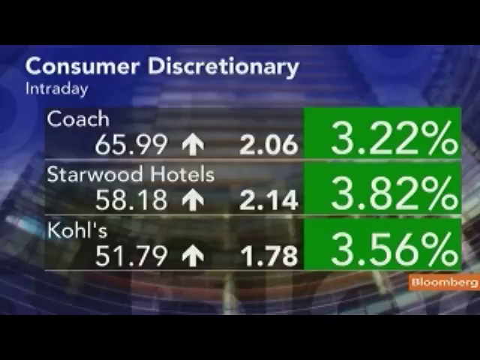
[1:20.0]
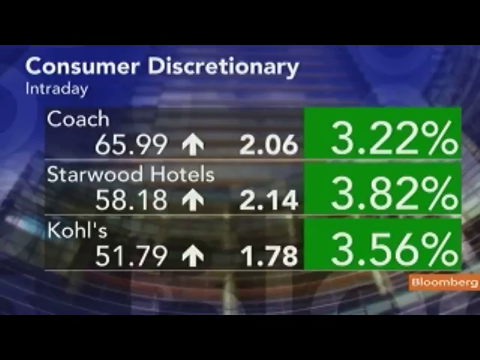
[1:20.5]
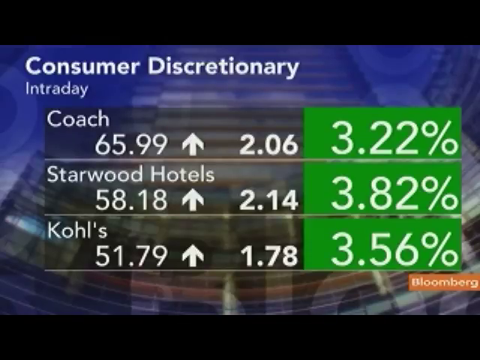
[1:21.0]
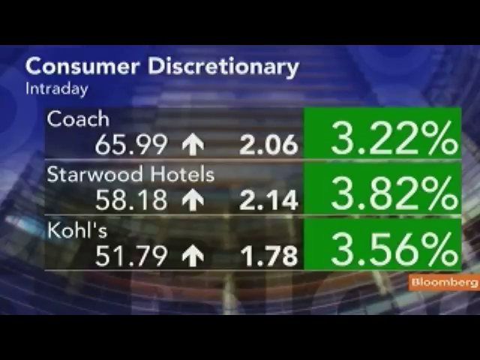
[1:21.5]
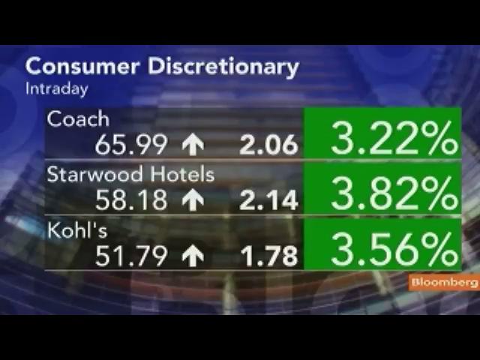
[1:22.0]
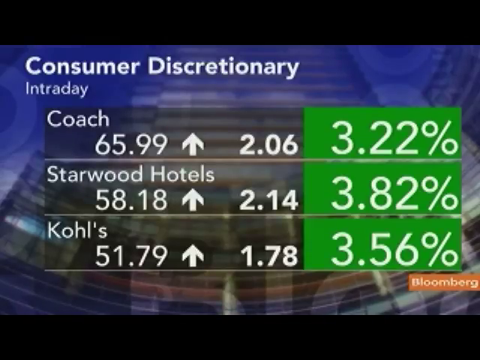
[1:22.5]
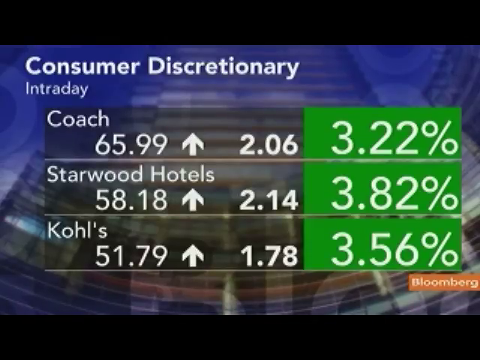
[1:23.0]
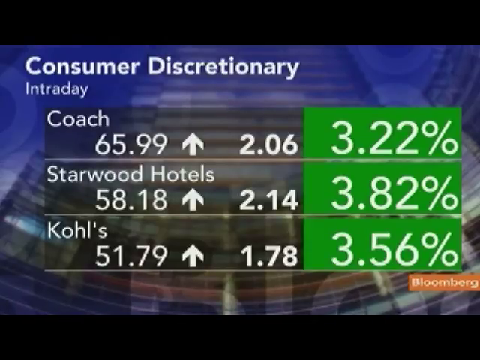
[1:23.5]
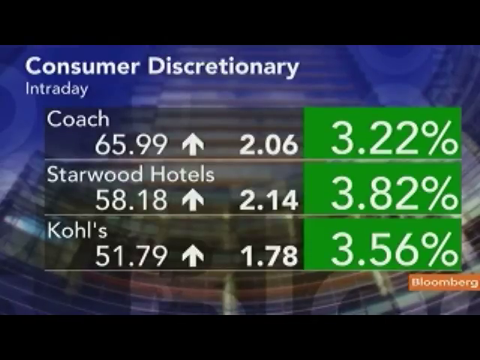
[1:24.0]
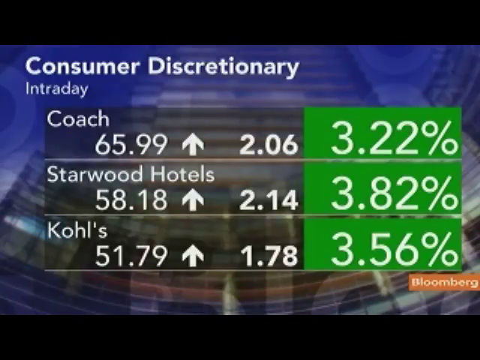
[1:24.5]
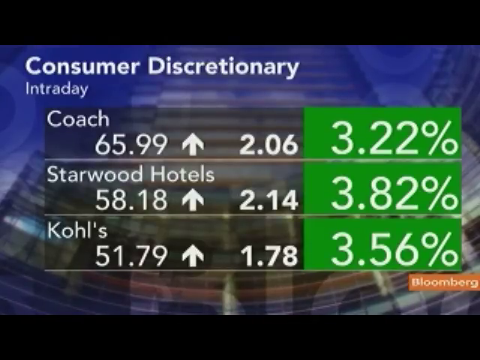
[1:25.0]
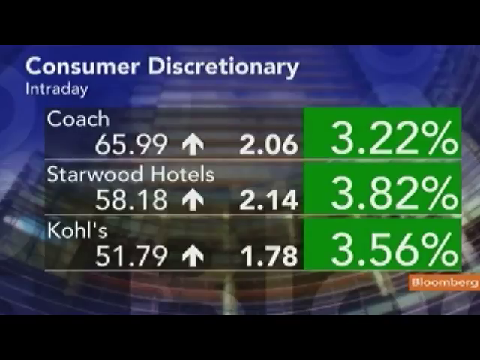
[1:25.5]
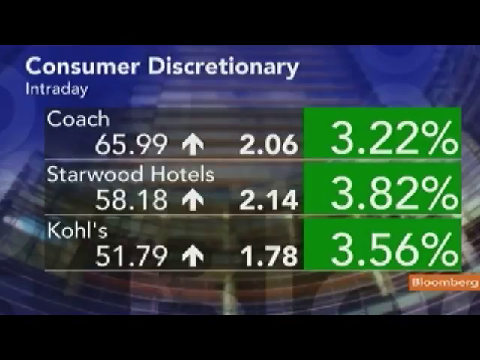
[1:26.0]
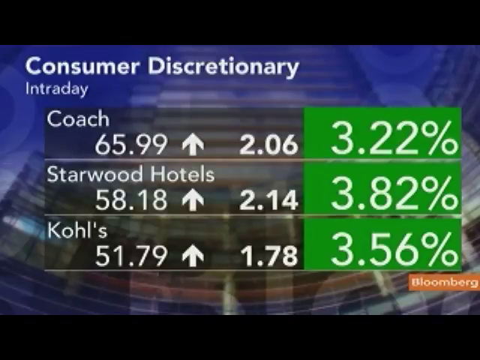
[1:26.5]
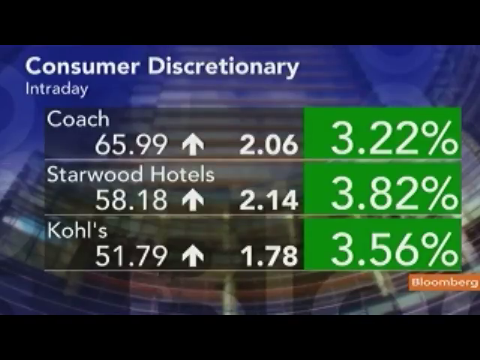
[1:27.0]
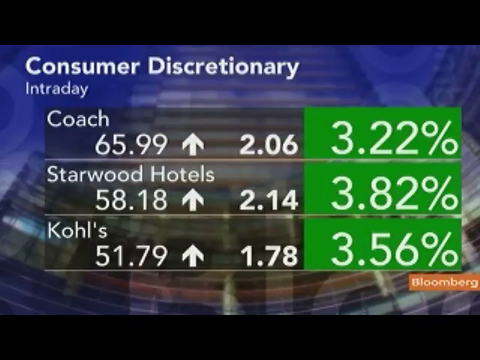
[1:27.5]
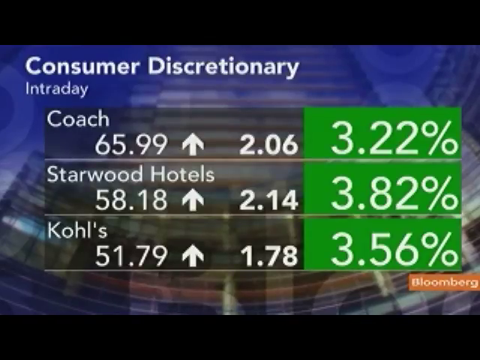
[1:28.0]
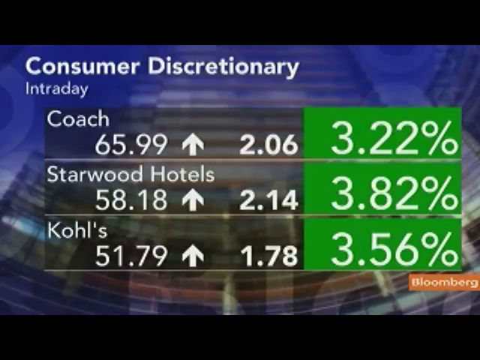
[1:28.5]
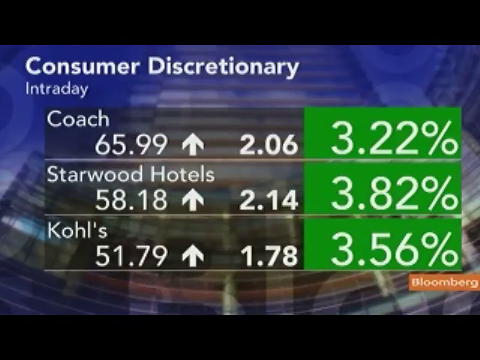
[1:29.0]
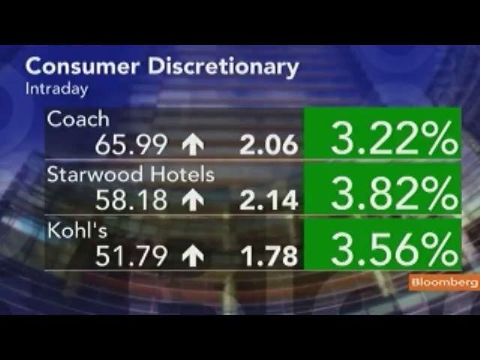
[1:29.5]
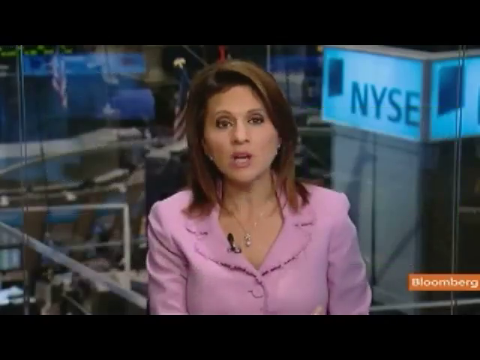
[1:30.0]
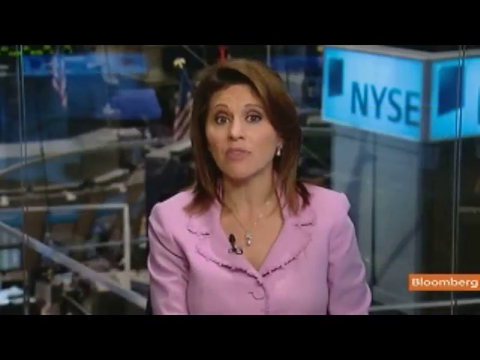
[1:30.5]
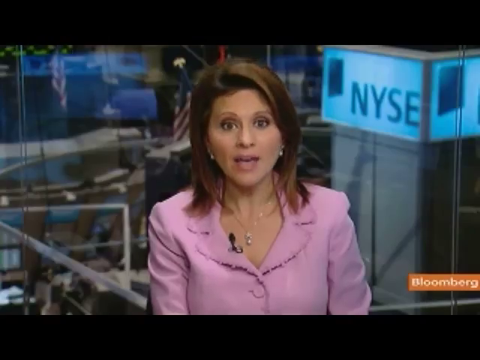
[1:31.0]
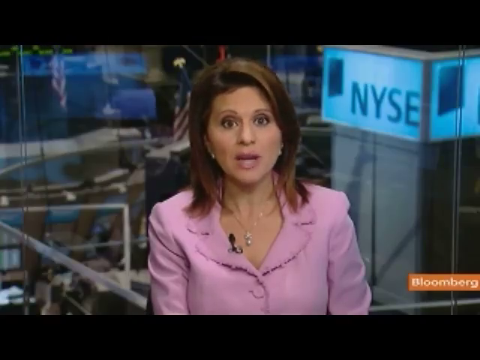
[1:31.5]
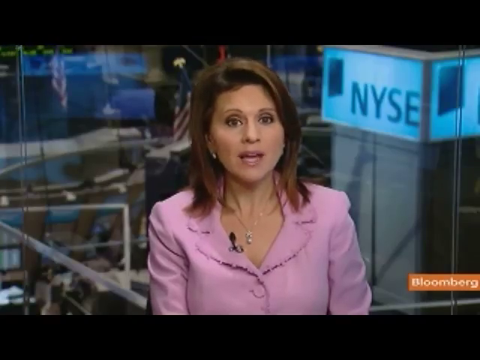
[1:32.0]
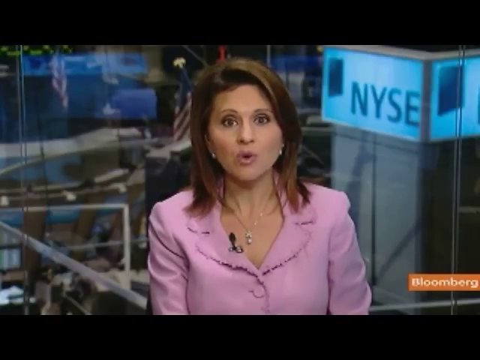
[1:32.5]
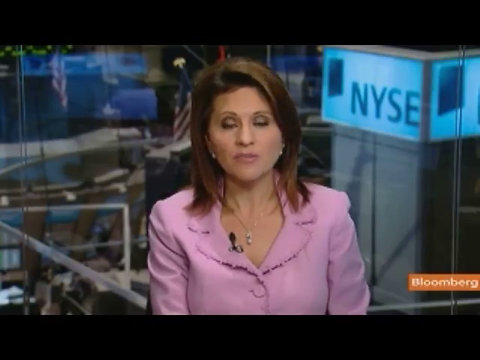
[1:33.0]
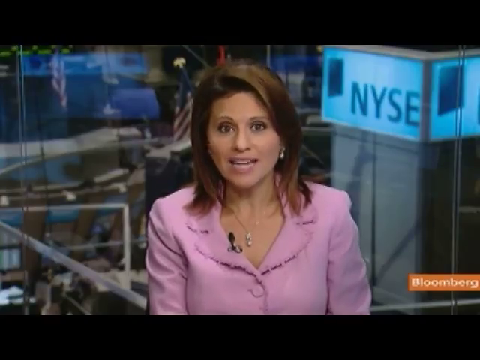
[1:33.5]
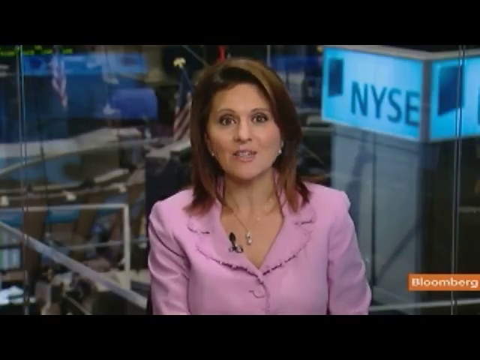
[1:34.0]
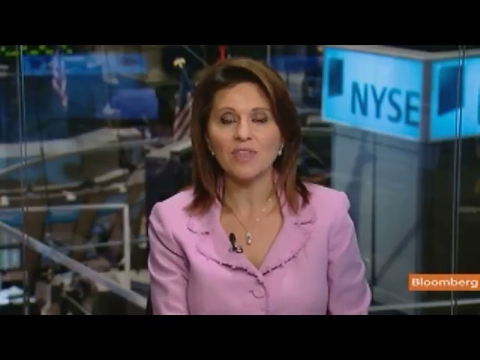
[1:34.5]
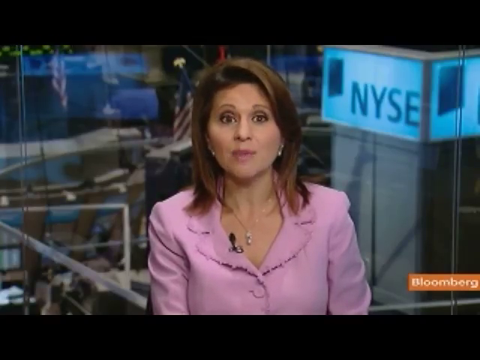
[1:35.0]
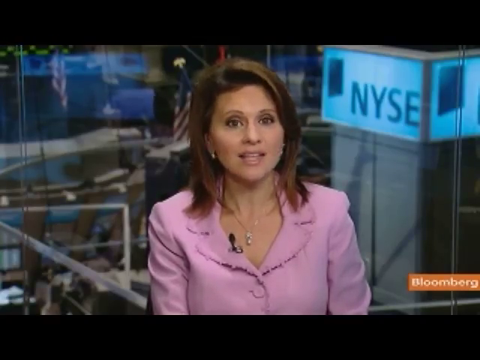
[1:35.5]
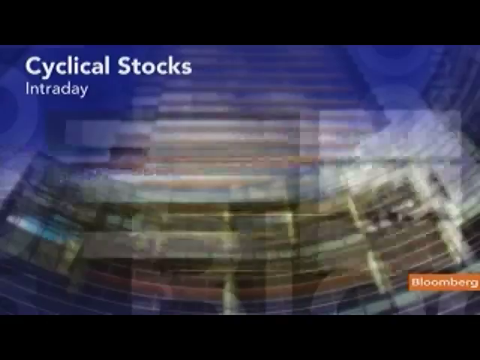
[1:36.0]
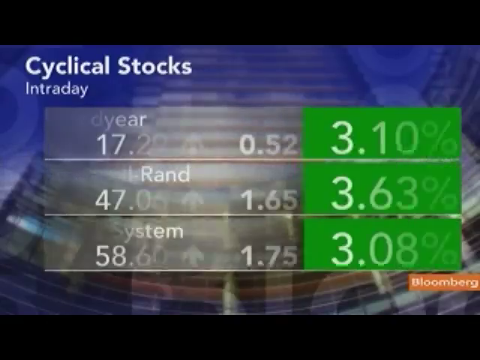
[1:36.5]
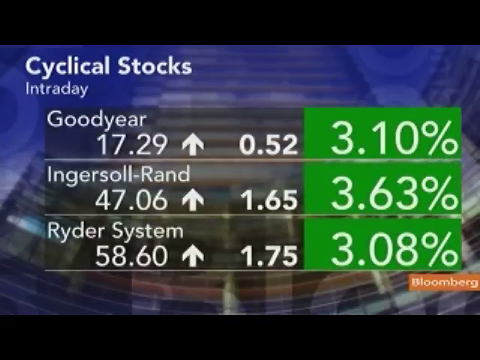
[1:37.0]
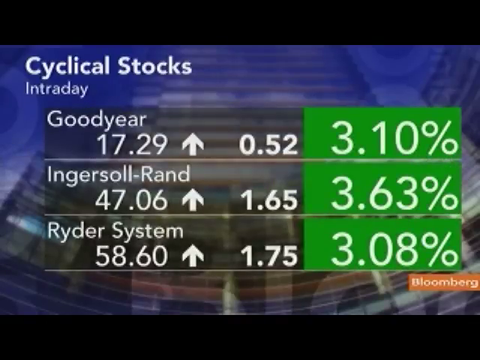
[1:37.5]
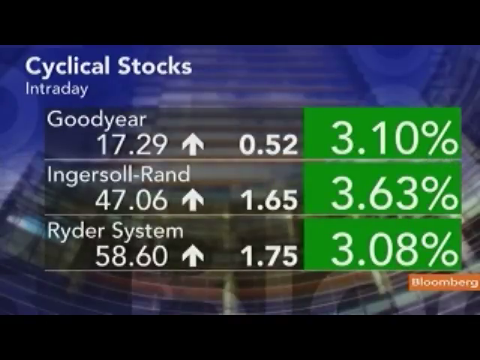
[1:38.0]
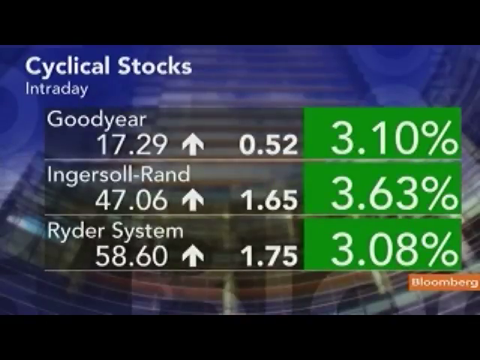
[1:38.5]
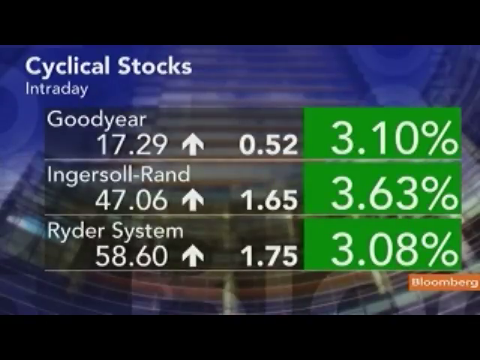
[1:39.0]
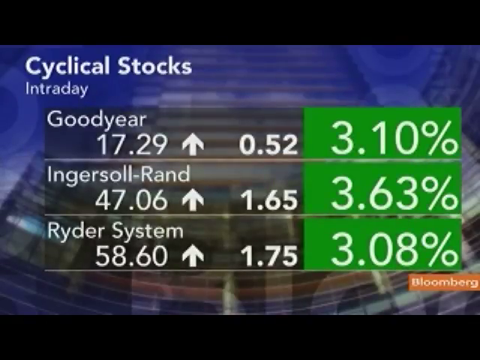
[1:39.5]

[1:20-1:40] The Bloomberg newscast shows a graphic on consumer discretionary with "Intraday" below it, listing three companies, all in green and going up: Coach is up 3.22%, Starwood Hotels is up 3.82%, and Kohl's is up 3.56%. The graphic shows all three on an upward trend. The video then returns to the woman talking; she wears a pink outfit and has a microphone on her lapel and brown hair, with the New York Stock Exchange NYSE logo behind her. The next graphic, titled "cyclical stocks" with "intraday" below, shows three other companies doing well: Goodyear is up 3.10%, Ingersoll Rand is up 3.63%, and Ryder System is up 3.08%.